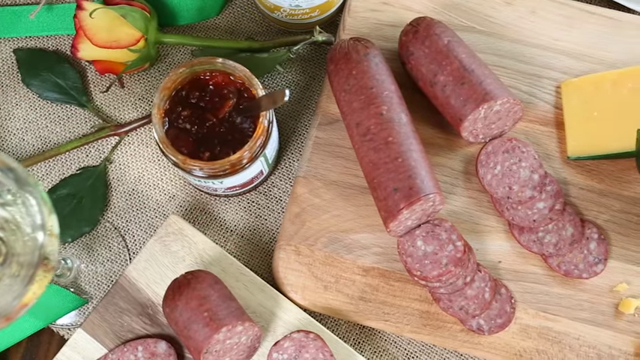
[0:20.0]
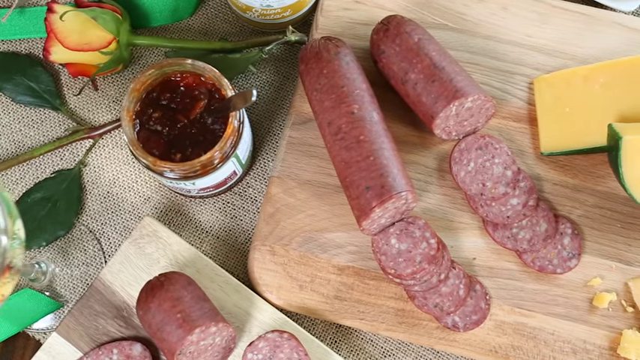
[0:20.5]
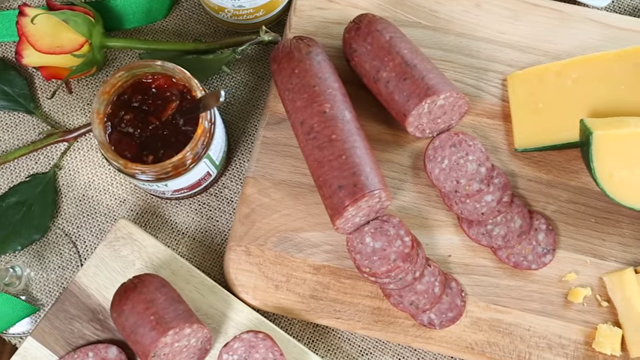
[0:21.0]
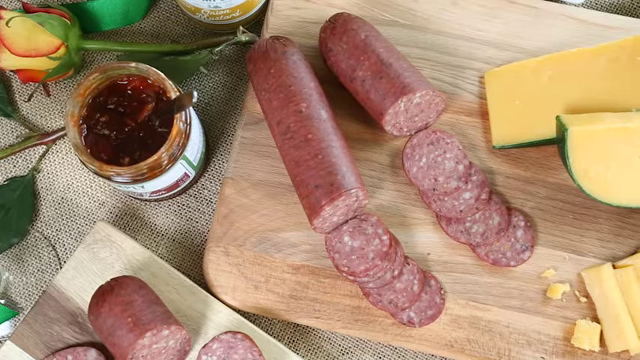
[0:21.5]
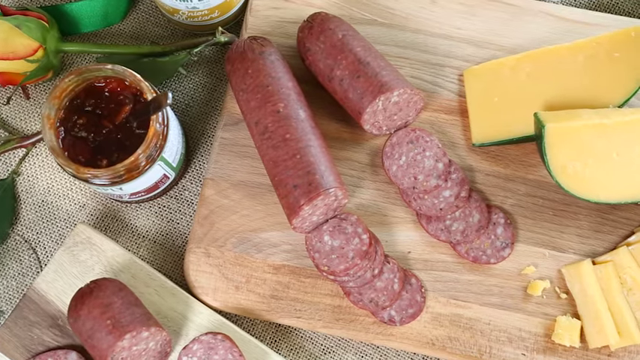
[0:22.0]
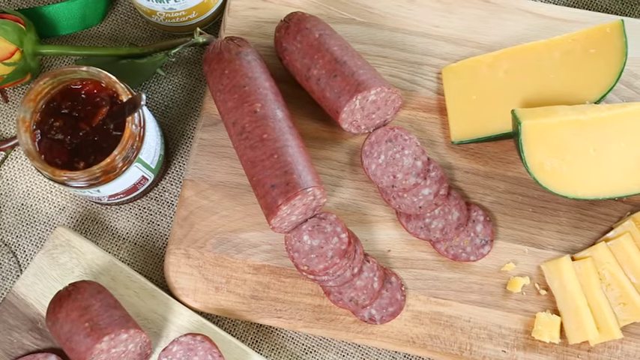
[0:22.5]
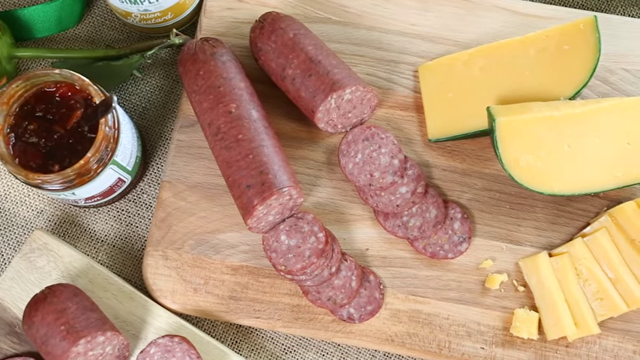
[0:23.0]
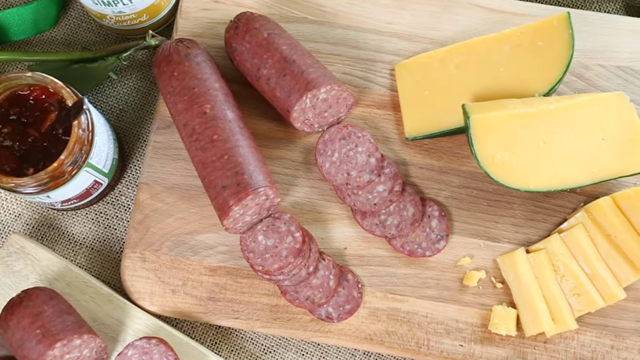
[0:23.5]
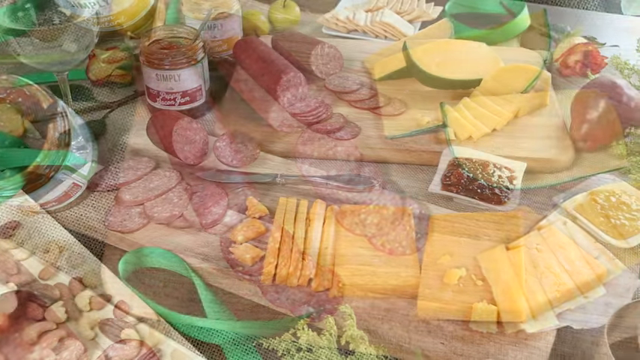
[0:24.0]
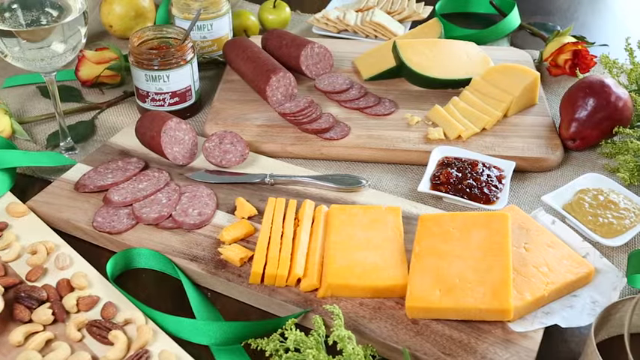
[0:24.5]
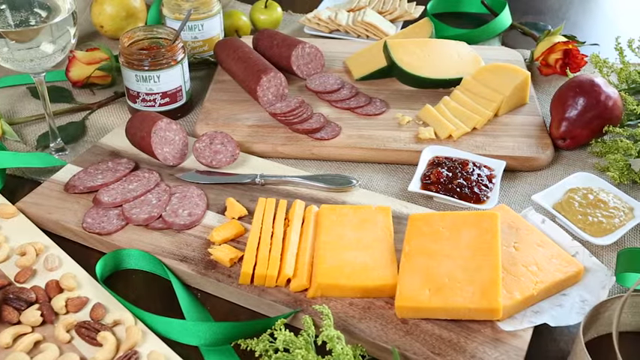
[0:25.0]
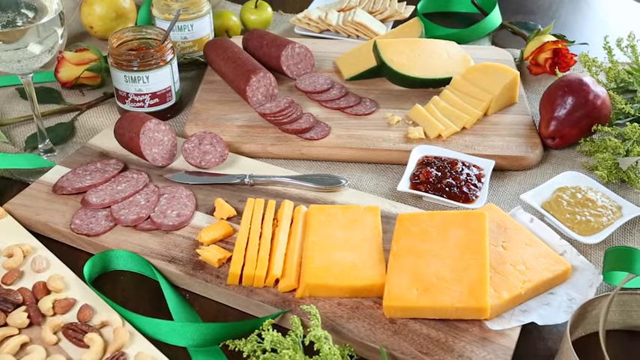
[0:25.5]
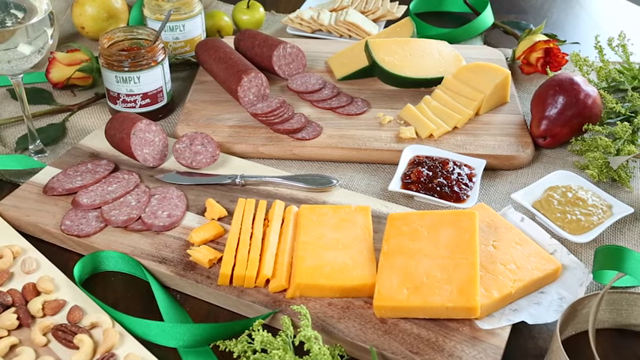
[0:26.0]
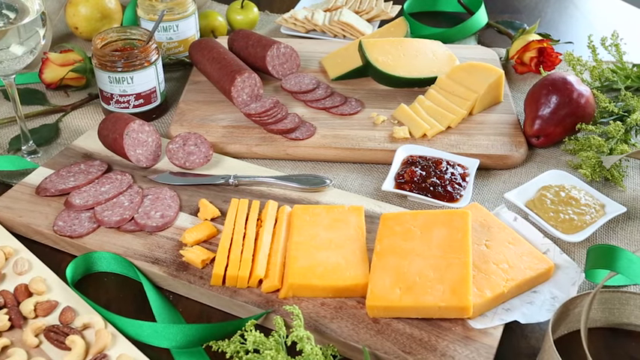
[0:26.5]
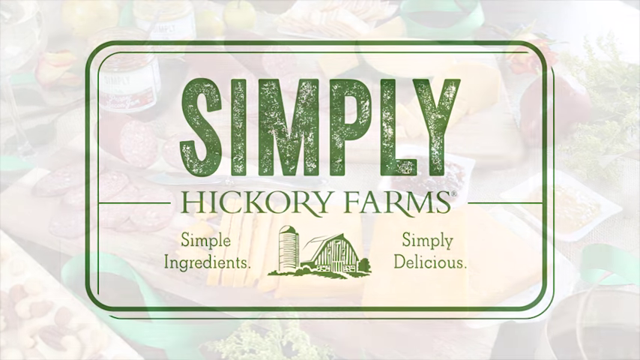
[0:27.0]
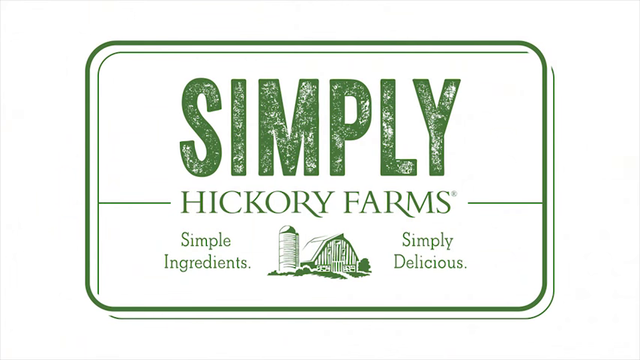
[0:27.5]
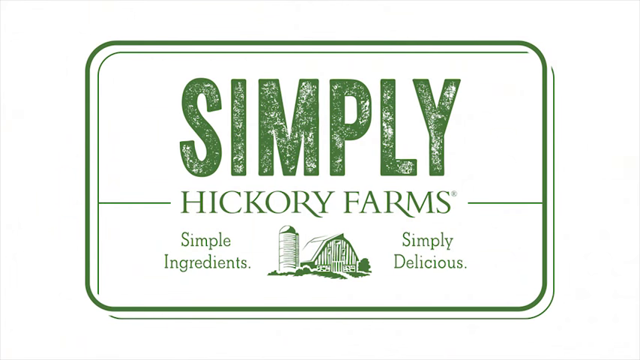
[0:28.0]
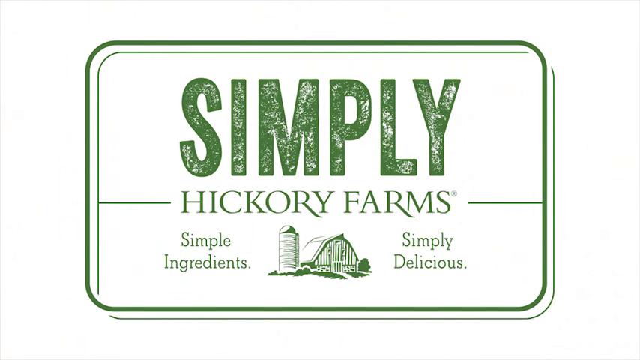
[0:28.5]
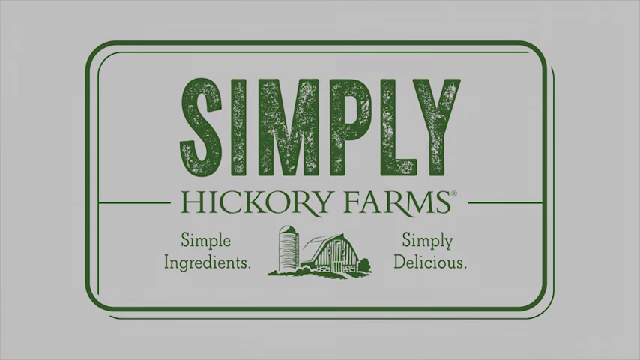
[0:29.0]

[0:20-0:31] The shot continues panning from left to right, showing a jar of jam. An overhead shot shows the salami and the cheese on the cutting board, with what looks like a woven tablecloth behind or under all of it. Another panning shot moves across all of the cheese, the spread and the jams. A silver knife is in the background, along with more apples, and there are some garnishes on the right side. The video then cuts to a screen that reads "Hickory Farm, simple ingredients, simply delicious." It appears to be a promotional clip of some kind.